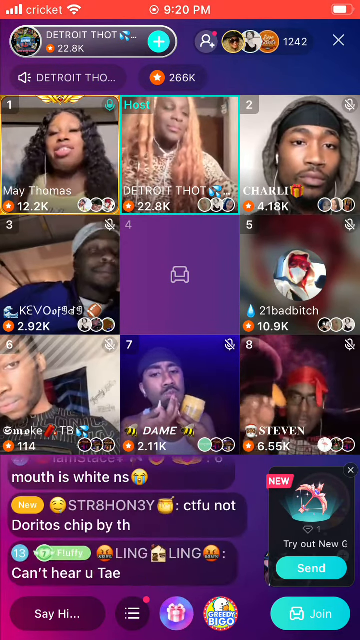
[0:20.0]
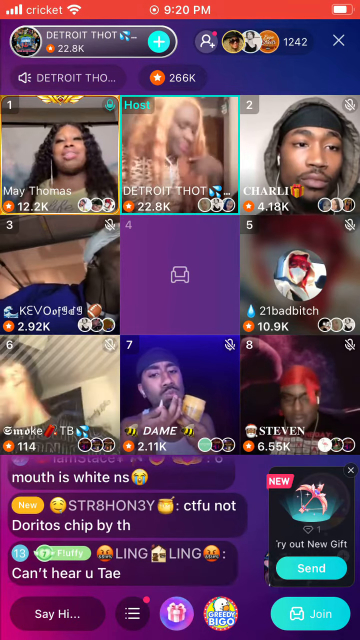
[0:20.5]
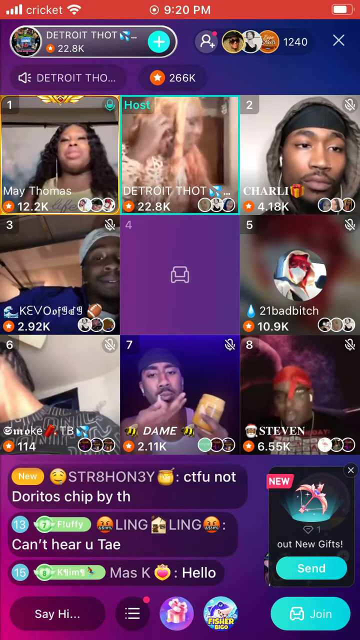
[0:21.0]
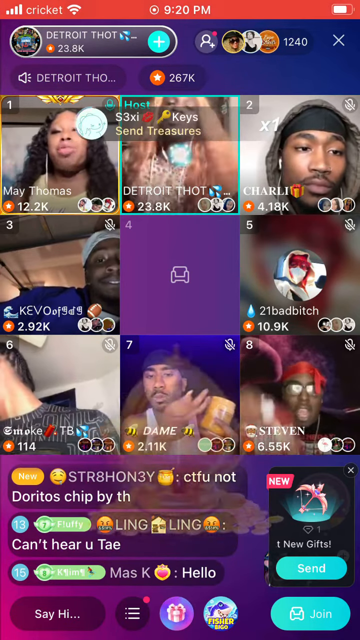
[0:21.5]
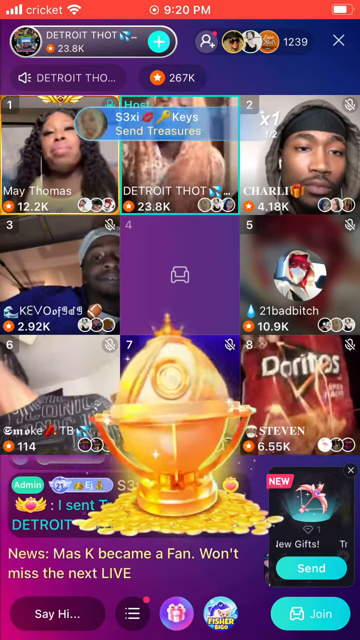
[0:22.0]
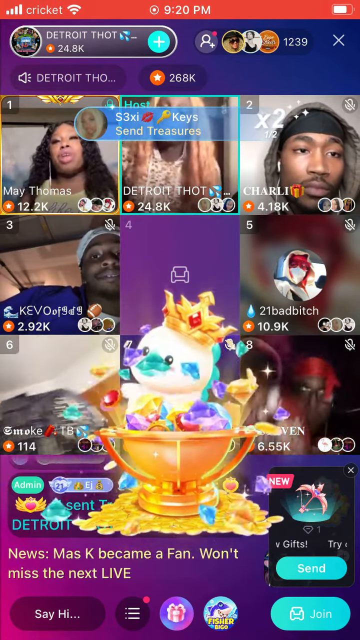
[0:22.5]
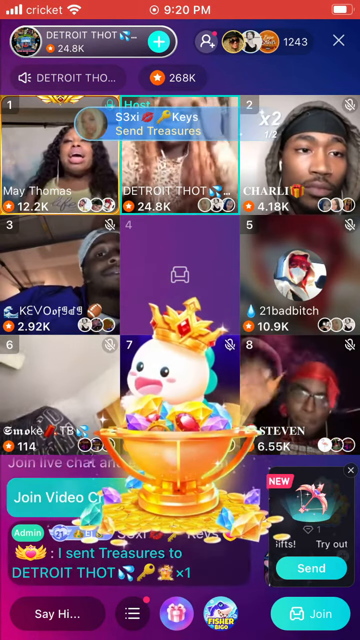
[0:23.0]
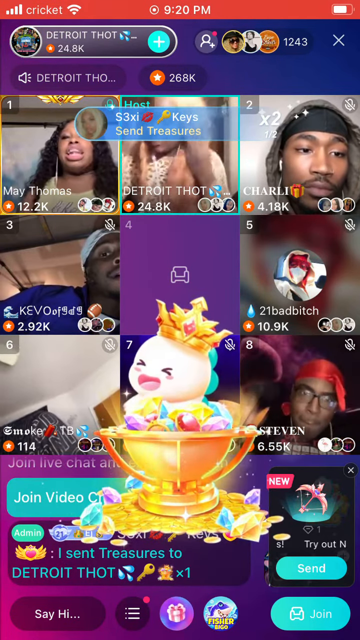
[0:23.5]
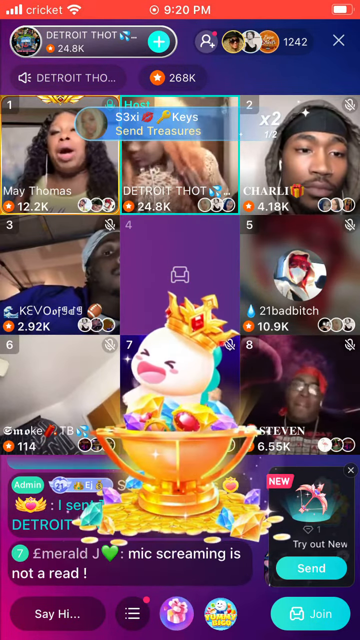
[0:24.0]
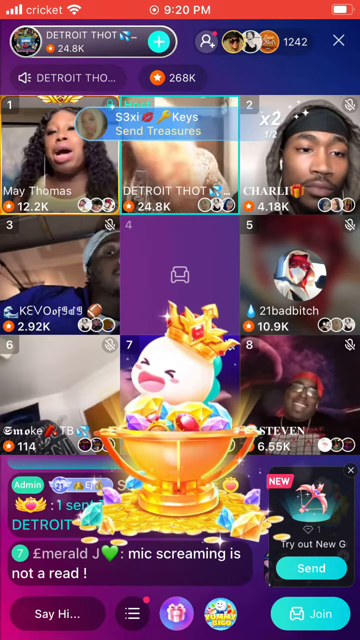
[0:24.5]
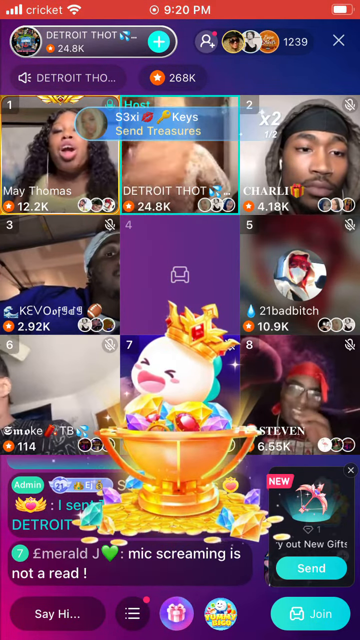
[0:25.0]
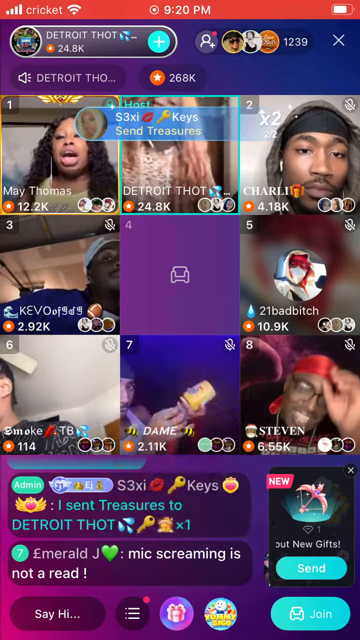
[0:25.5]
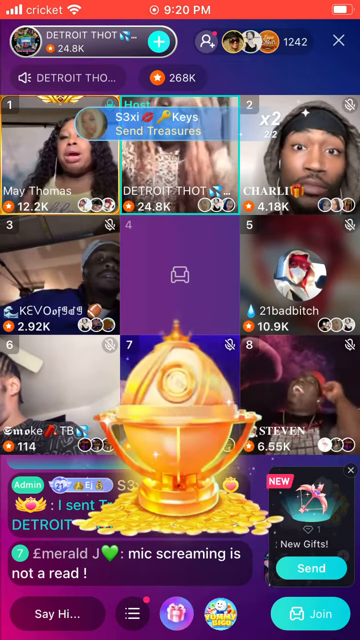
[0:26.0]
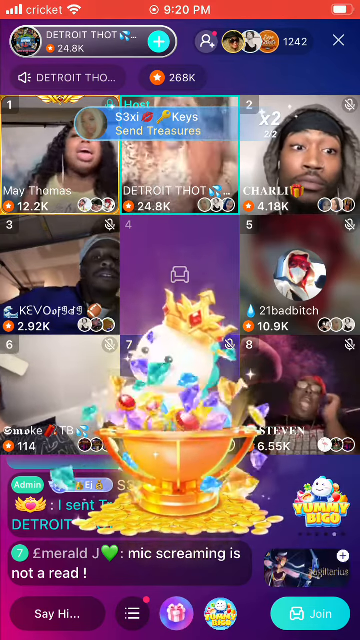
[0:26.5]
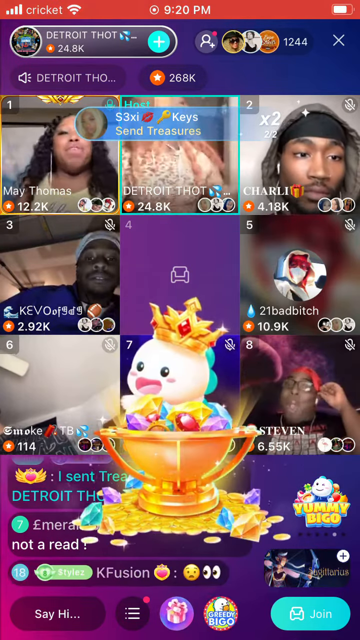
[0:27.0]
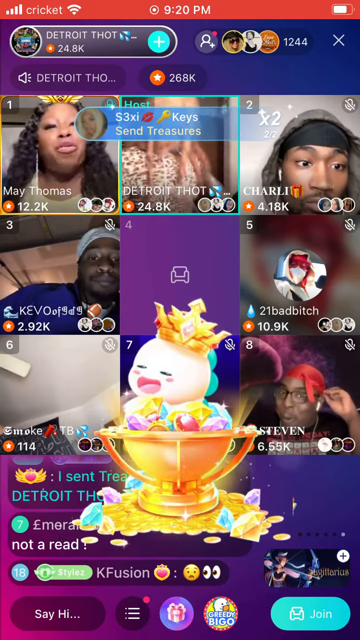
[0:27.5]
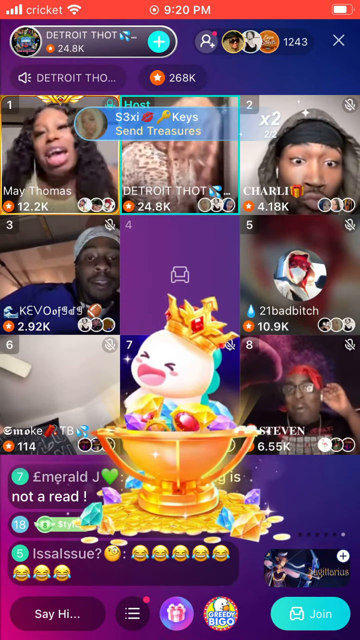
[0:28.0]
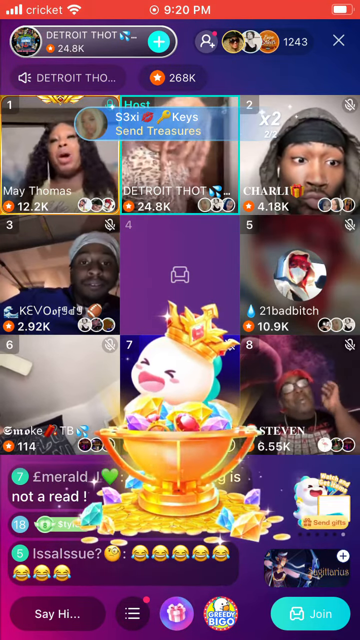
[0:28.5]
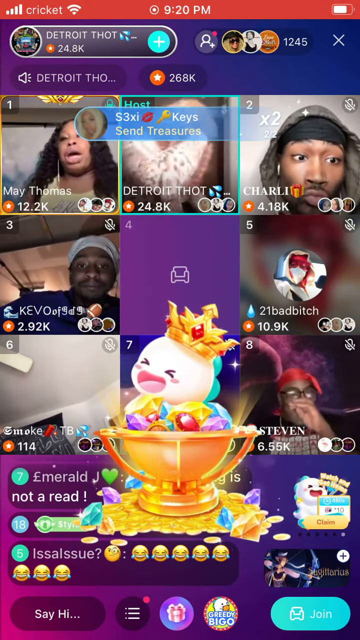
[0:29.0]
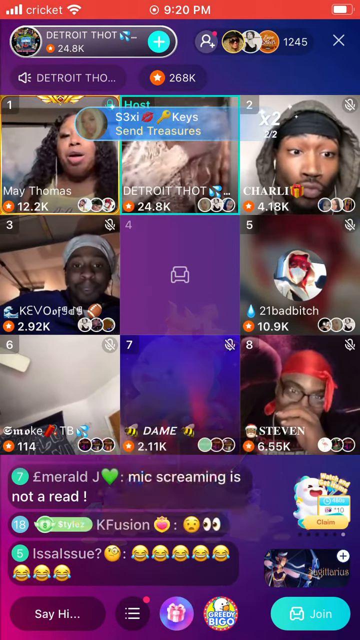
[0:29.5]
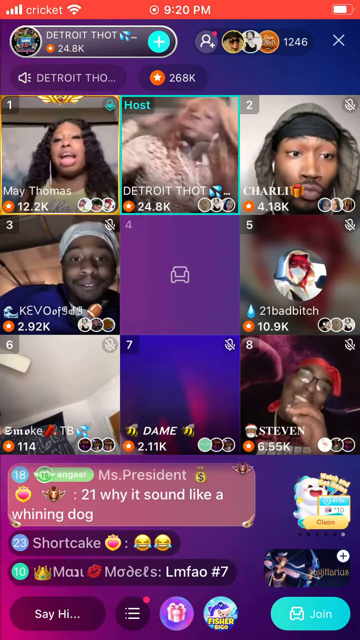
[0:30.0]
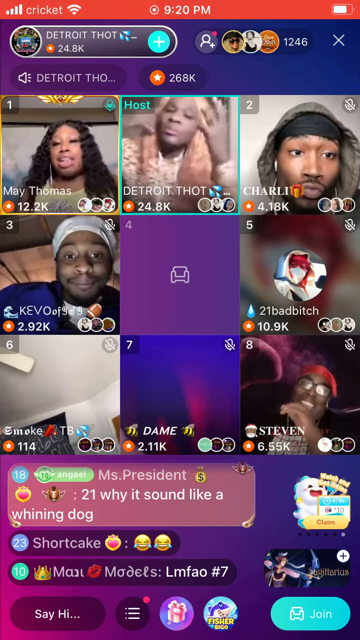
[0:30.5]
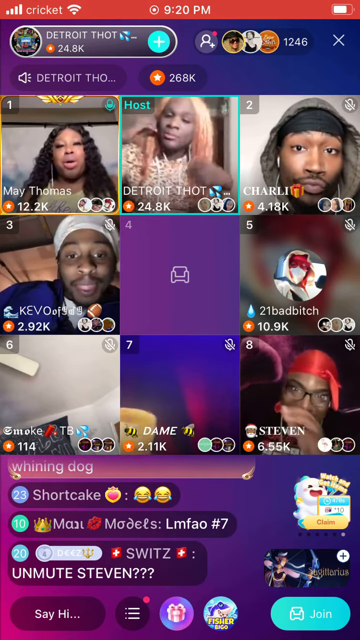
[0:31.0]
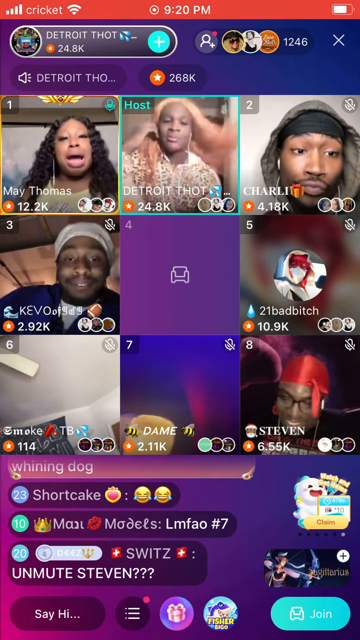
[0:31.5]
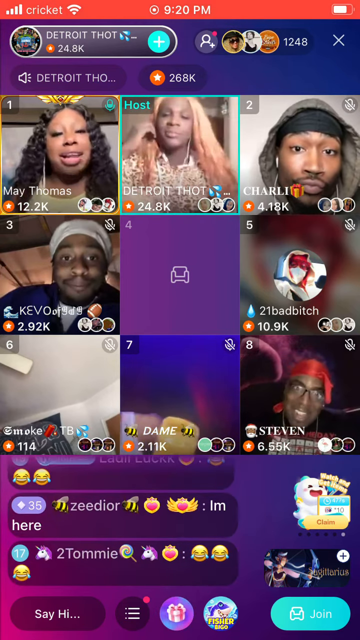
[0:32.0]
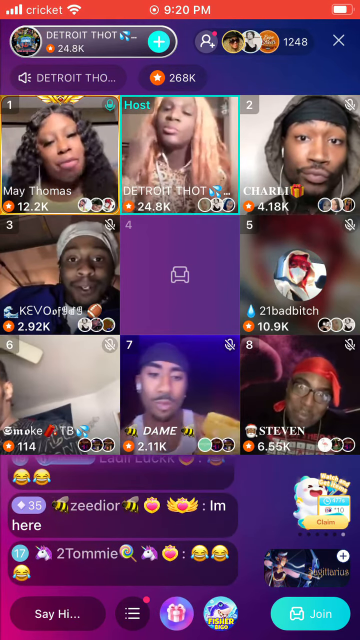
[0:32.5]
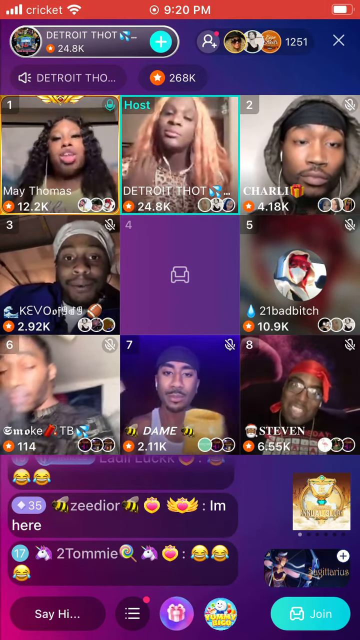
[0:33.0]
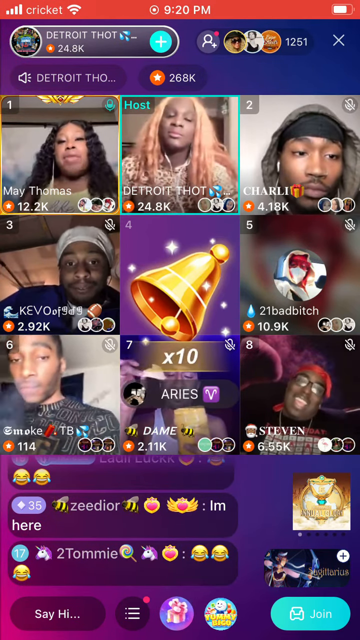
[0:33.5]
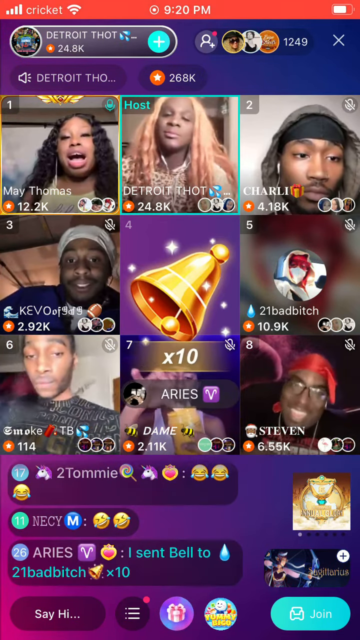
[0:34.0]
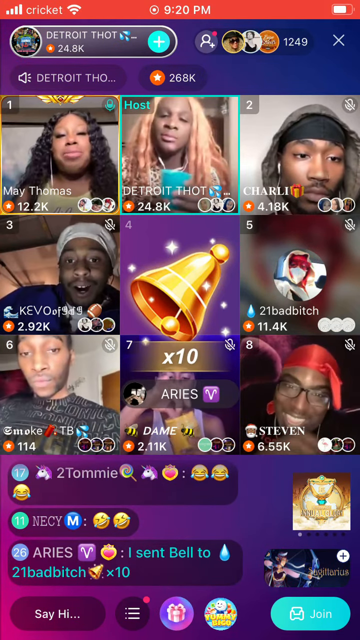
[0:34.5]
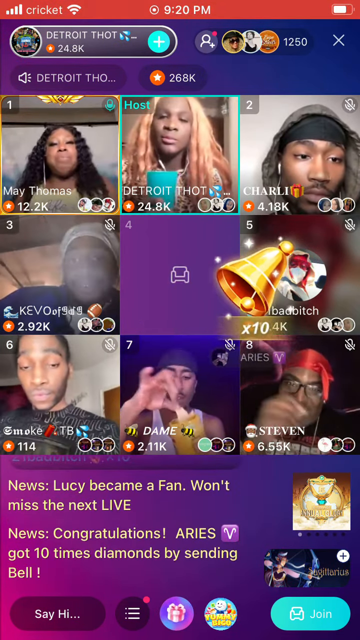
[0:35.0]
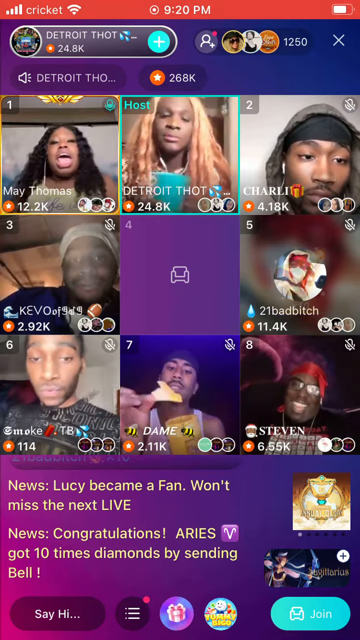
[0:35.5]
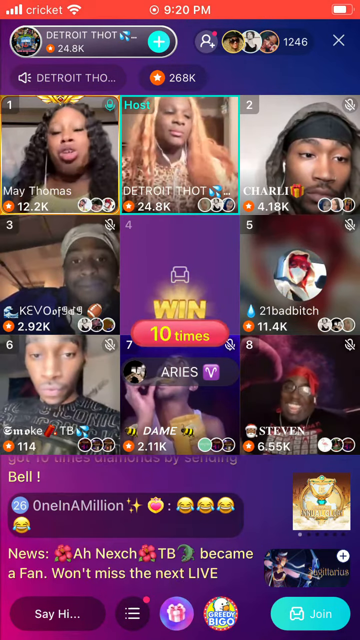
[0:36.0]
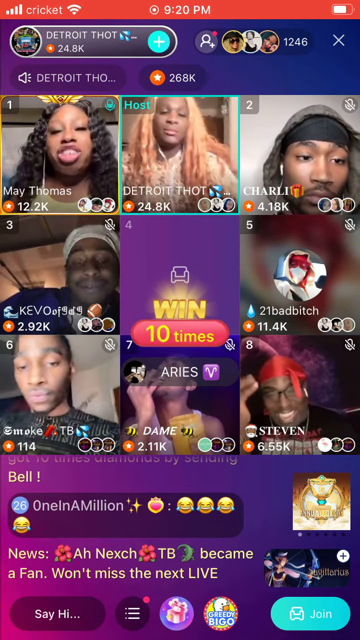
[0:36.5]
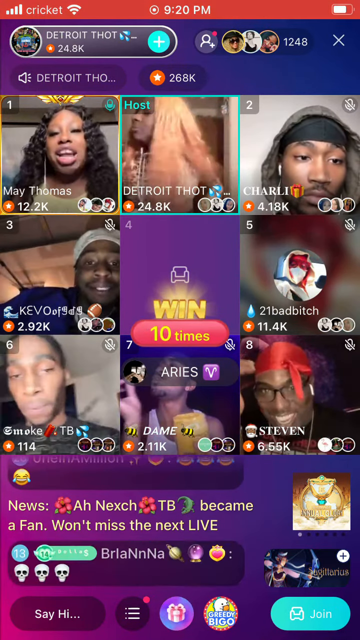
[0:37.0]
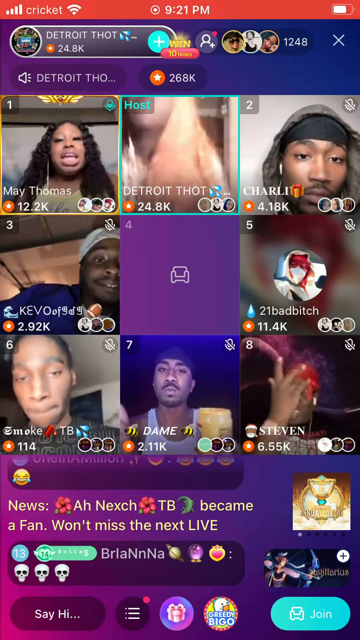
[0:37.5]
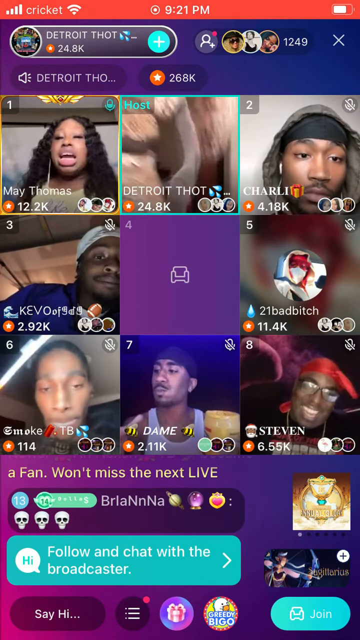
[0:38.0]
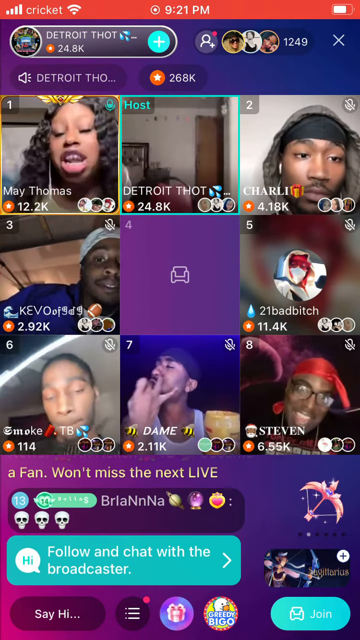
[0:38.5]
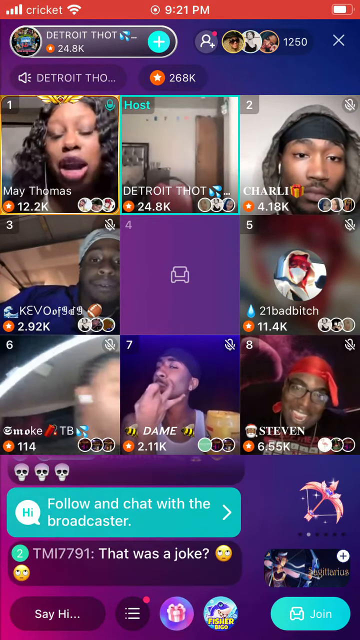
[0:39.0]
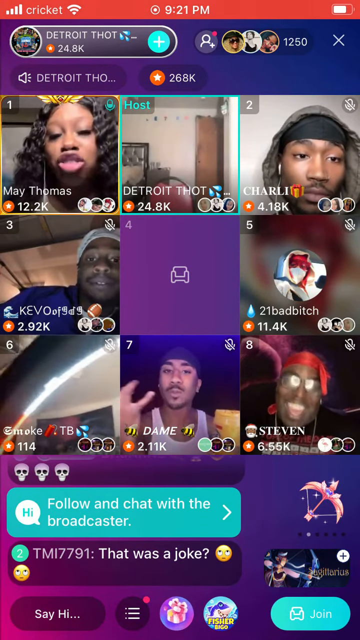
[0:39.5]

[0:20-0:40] A number of icons appear on the screen, including a little white animal with a crown, a bunch of jewels, and a golden goblet with shining light coming off of it. The seven or eight individuals in the call seem very energetic, and various logos appear, including one that says "wing" with some text about it. Quite a few people post messages in the chat about the stream. The setting does not change: it stays on the page showing the live stream of these people in a direct call with each other, with the chat viewable at the bottom of the screen. The people seem to be reacting, moving around, talking to each other and making fun.